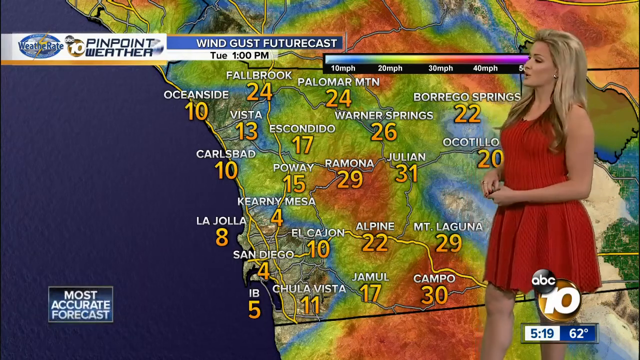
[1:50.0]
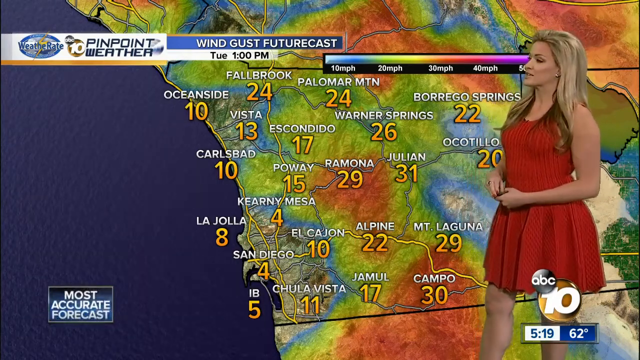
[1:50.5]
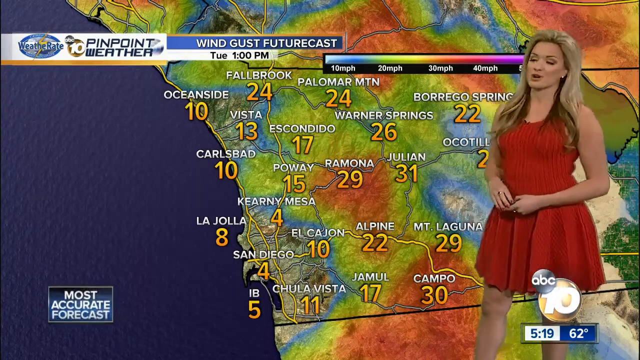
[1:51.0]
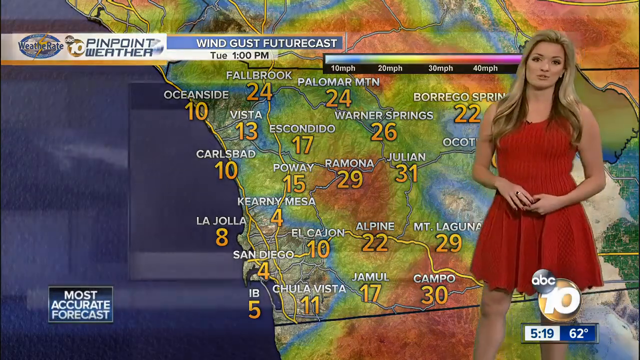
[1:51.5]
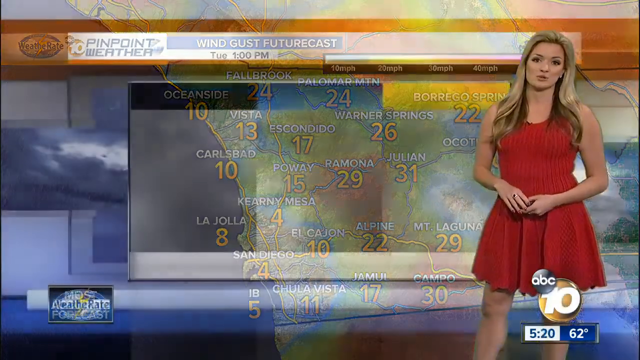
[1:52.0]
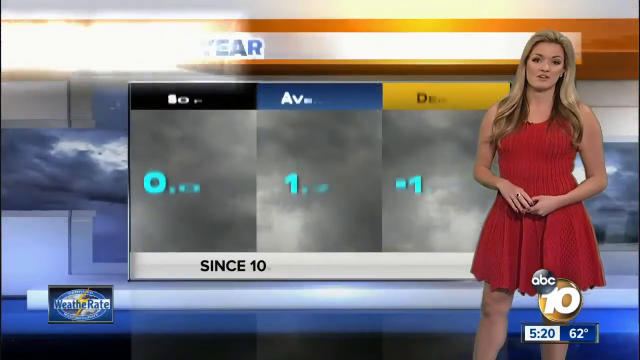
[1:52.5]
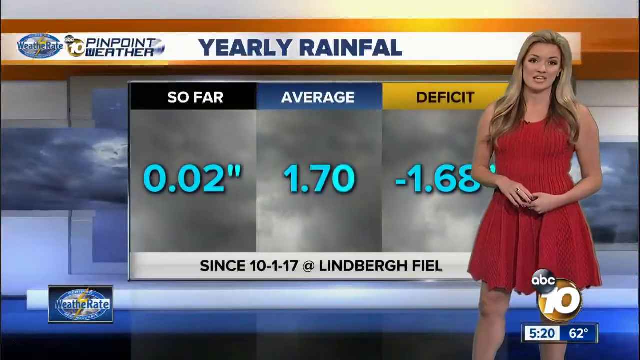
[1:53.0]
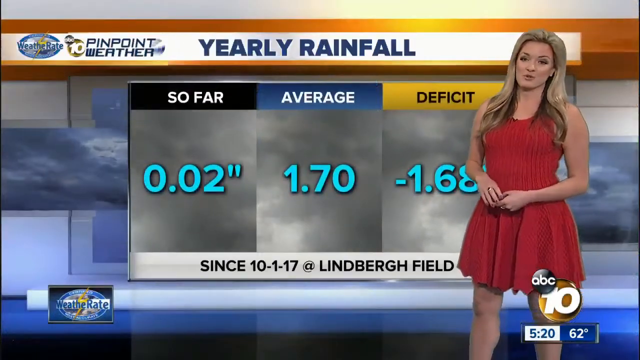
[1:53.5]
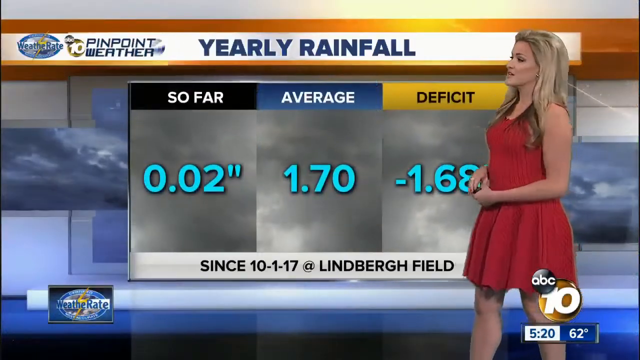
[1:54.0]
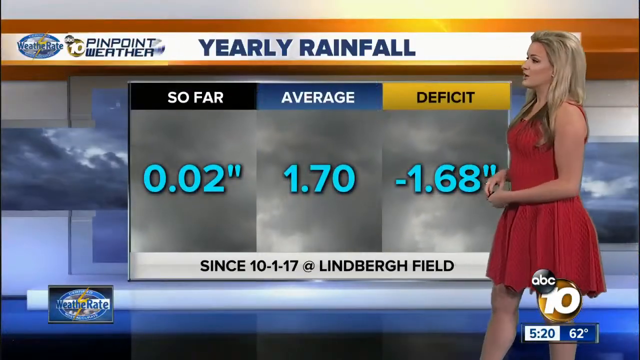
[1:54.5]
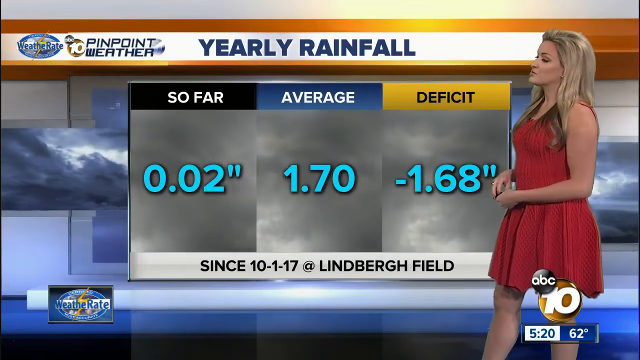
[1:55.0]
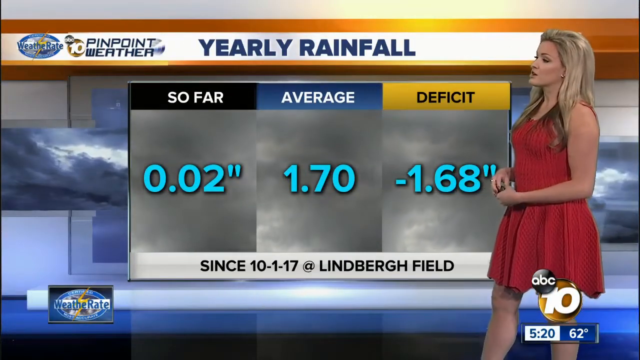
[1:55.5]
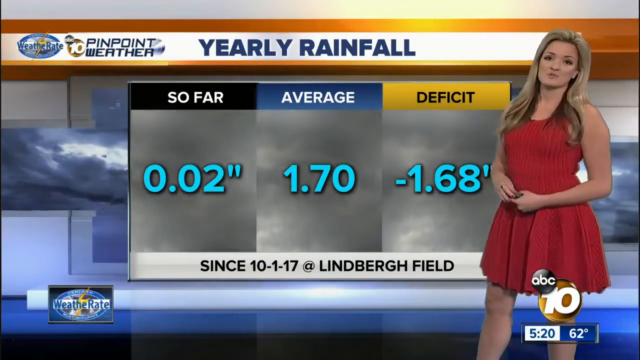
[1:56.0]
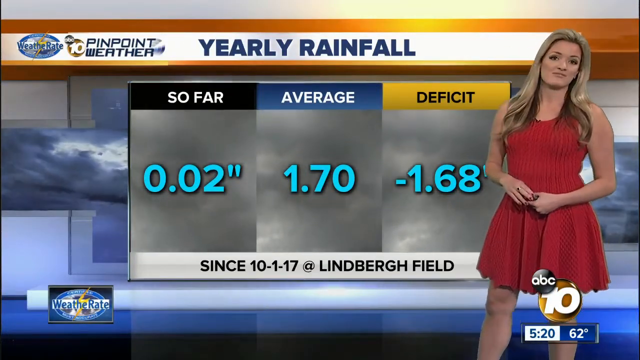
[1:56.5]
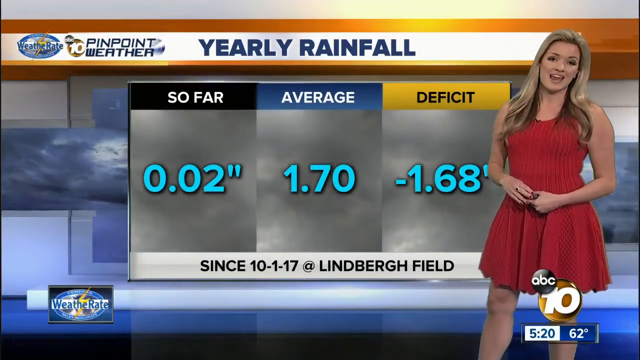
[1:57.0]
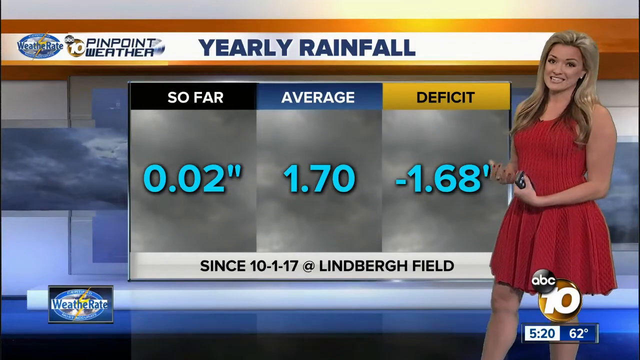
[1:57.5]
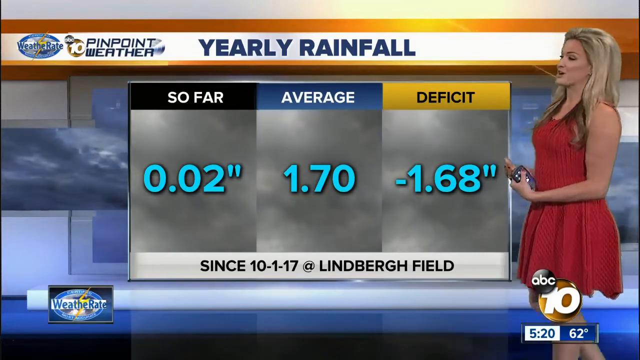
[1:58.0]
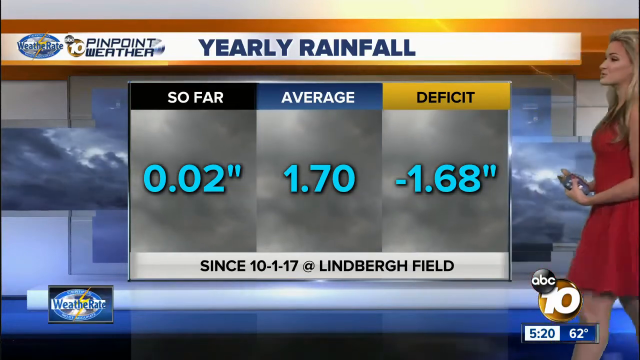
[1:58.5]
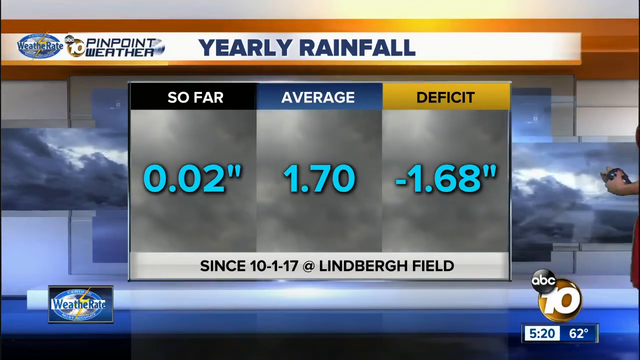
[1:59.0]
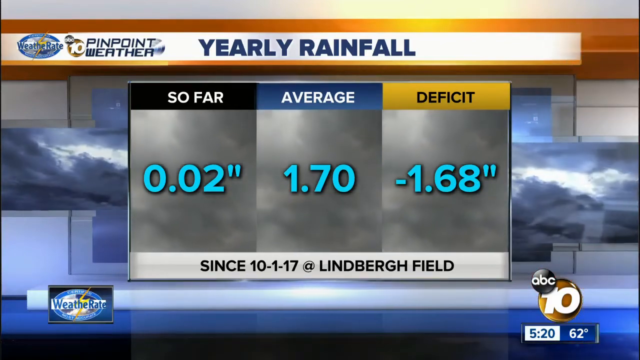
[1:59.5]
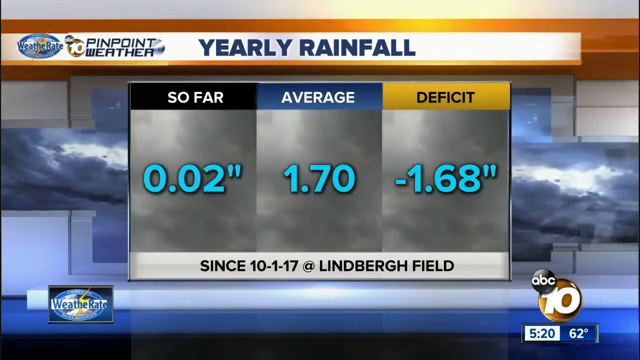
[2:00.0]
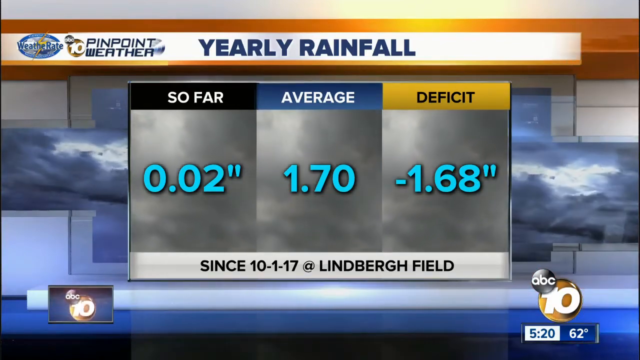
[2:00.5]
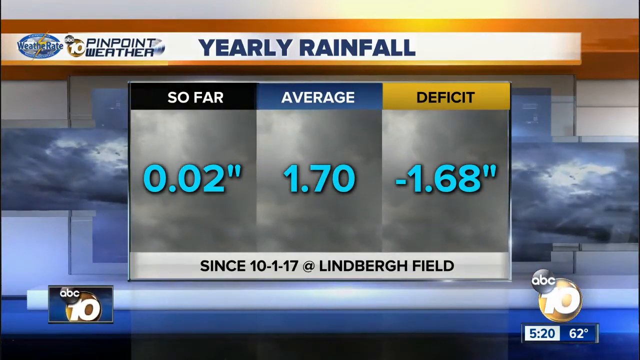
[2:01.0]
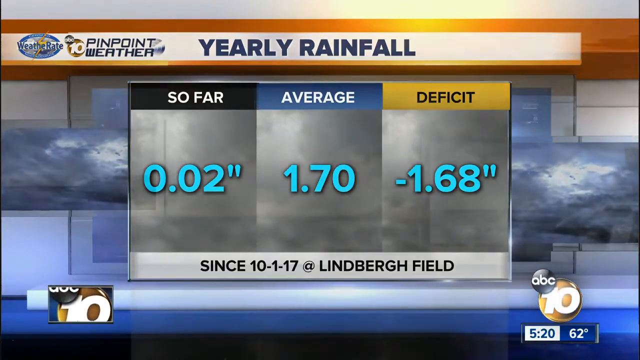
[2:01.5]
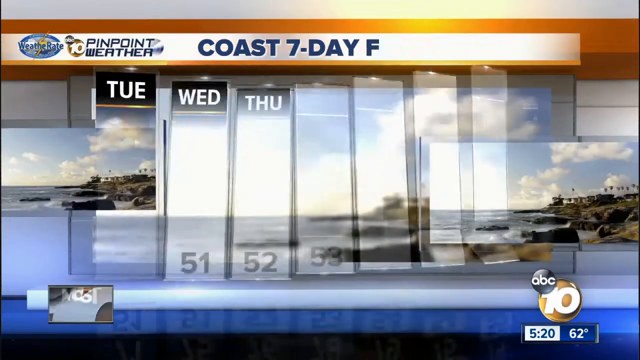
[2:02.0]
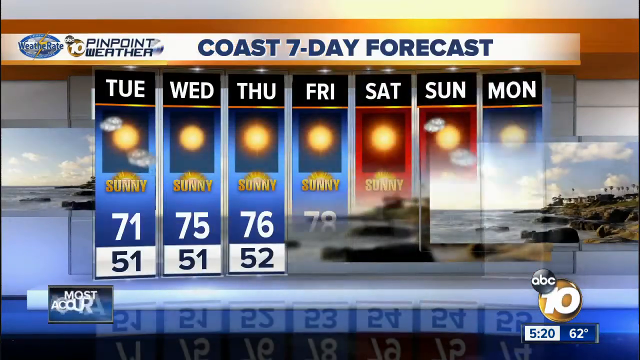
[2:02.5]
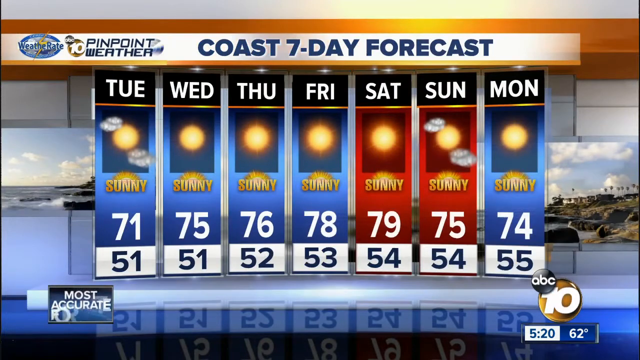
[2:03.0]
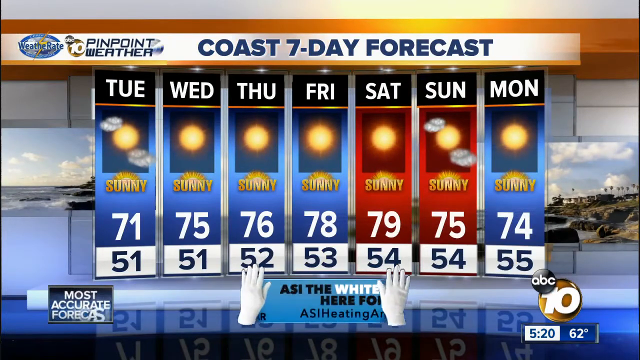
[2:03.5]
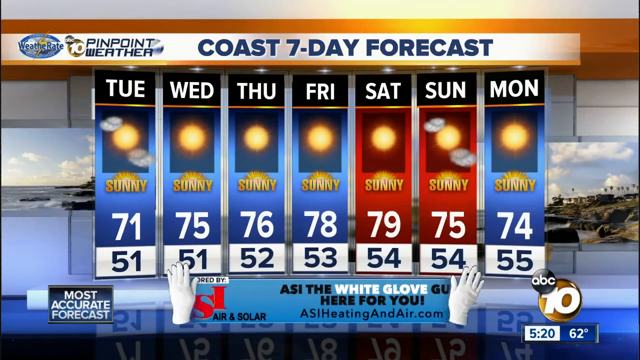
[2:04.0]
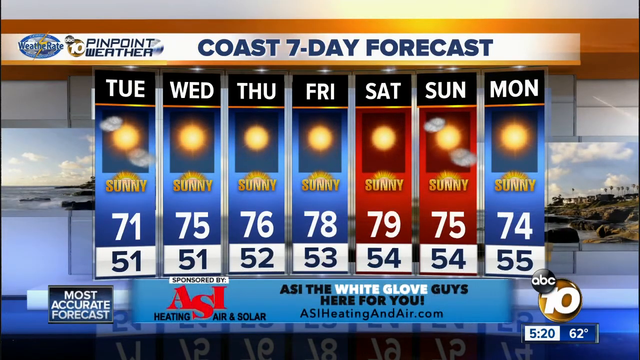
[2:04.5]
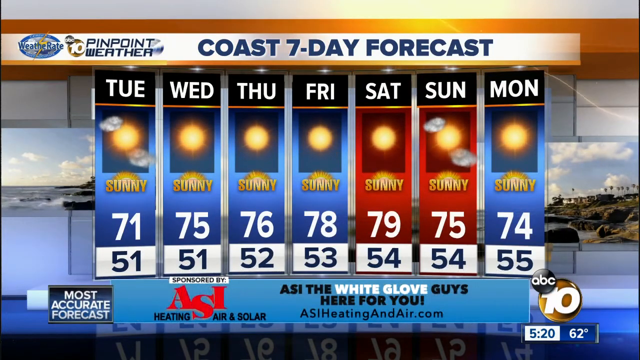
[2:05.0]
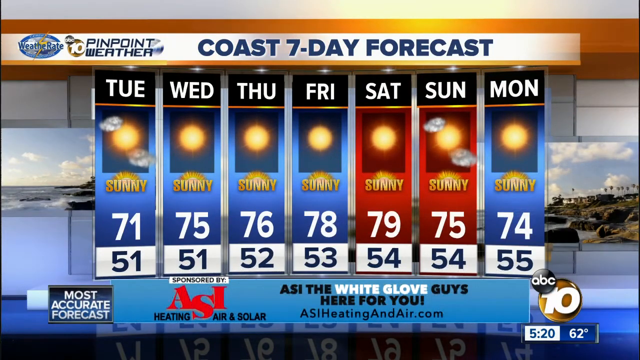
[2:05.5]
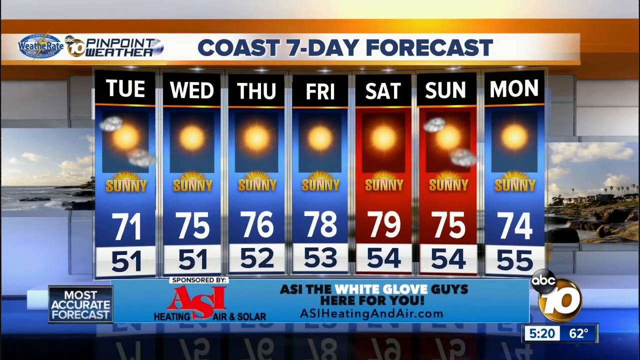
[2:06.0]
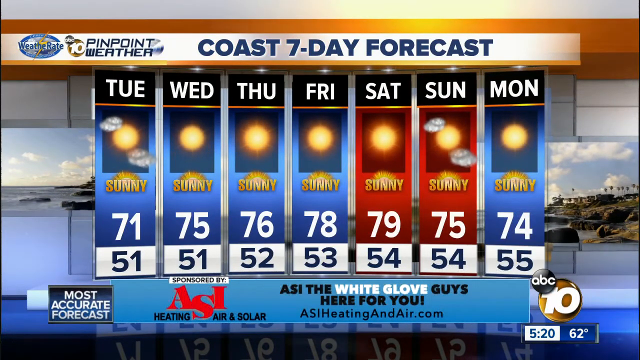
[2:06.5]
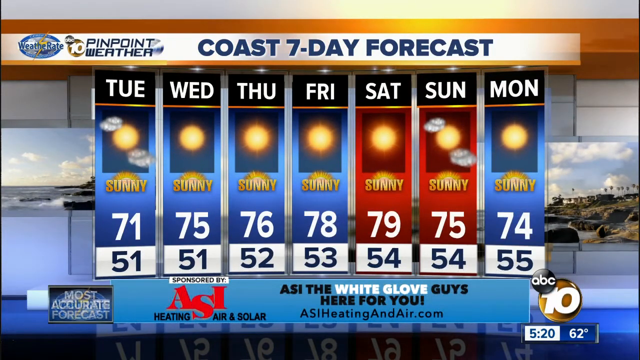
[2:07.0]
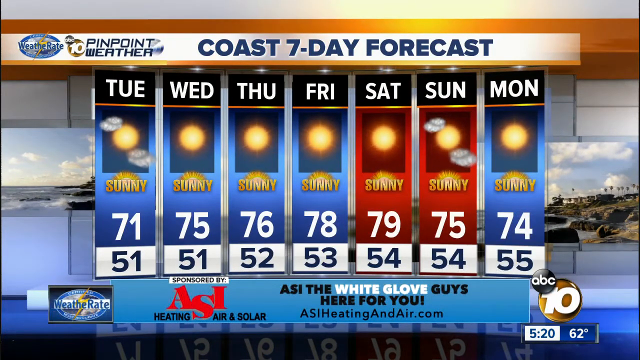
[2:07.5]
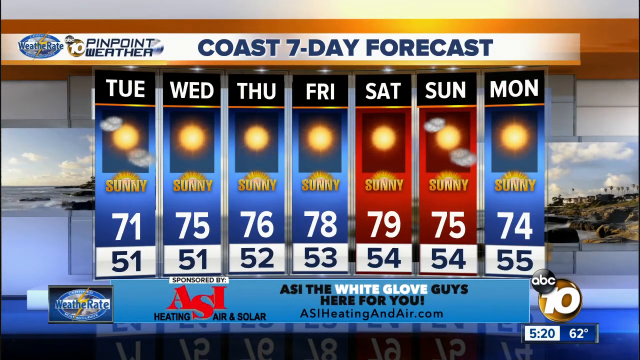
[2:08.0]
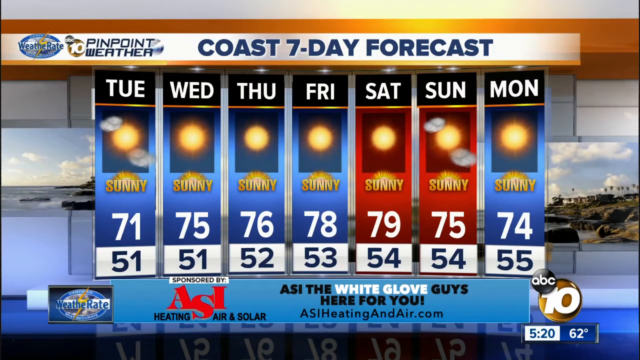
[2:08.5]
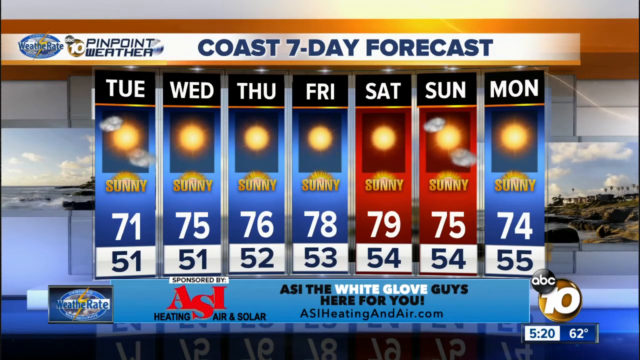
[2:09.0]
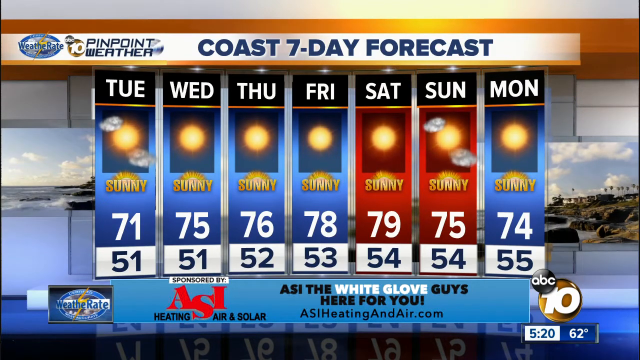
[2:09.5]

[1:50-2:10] The map switches to a new graphic titled "Yearly Rainfall," with three headings at the top: "So Far" on a black background, "Average" on blue, both with white writing, and "Deficit" on yellow with black writing. Beneath them are dark clouds, with blue numbers under each heading: "0.02 inches," "1.70 inches" and "negative 1.68 inches." Below that, a white text banner reads "Since 10-1-17 at Lindbergh Field" in black all caps. Rolling clouds are in the background, and the weather woman steps off camera to the right so that the graphic takes up the whole center area. The scene then switches to a graphic reading "Coast 7-Day Forecast" in dark all-caps writing at the top. It shows the seven days of the week, apparently from Tuesday to Monday, abbreviated to their first three letters in white all caps on black banners, with a column under each day; all the columns are blue except Saturday and Sunday, which are red.